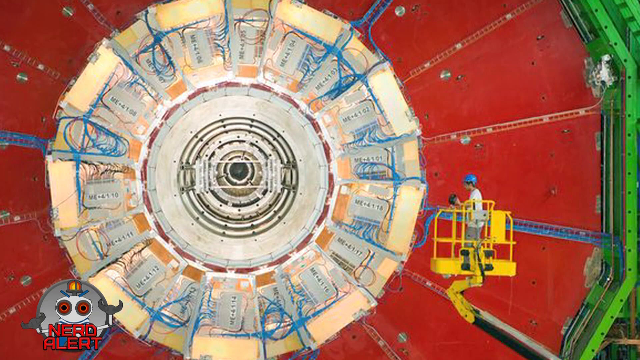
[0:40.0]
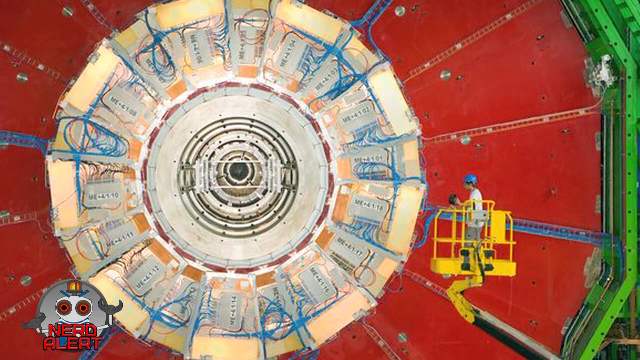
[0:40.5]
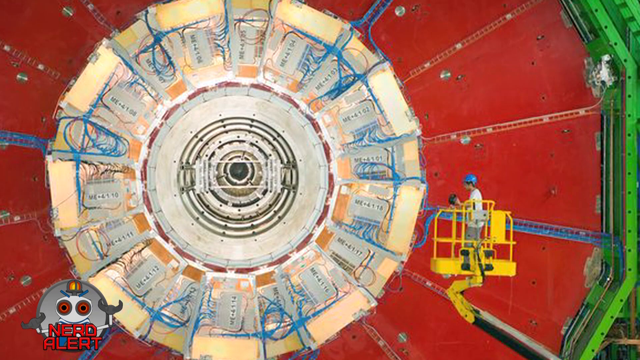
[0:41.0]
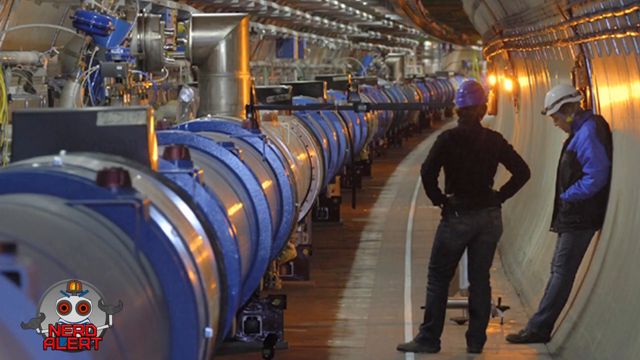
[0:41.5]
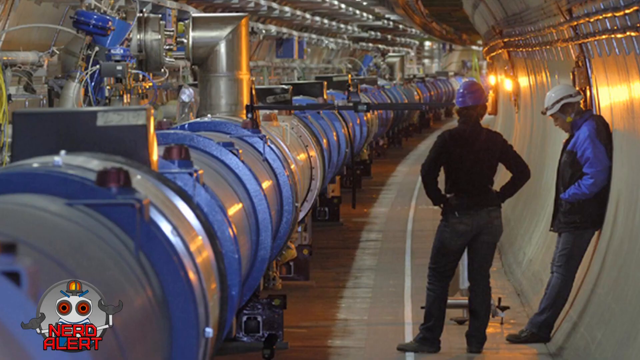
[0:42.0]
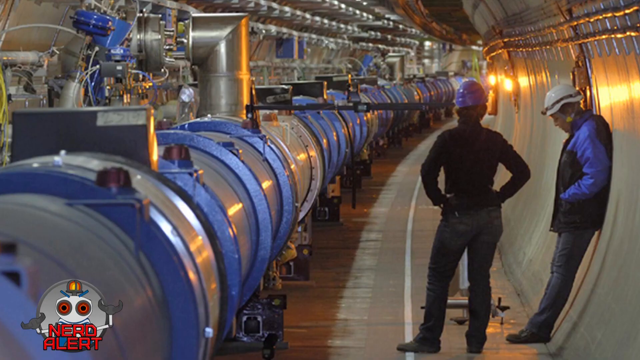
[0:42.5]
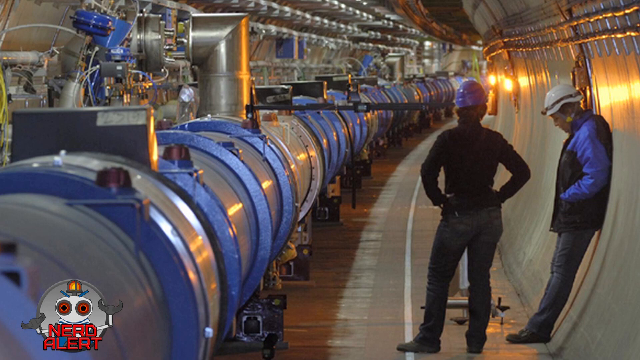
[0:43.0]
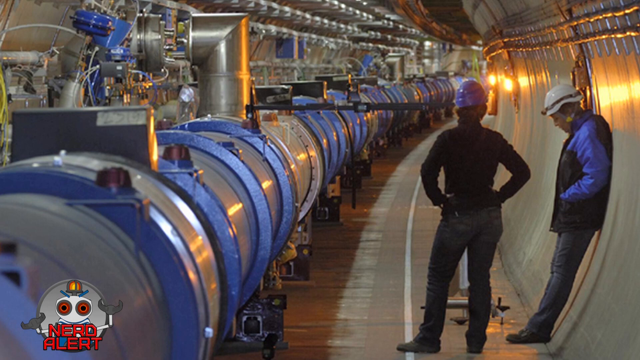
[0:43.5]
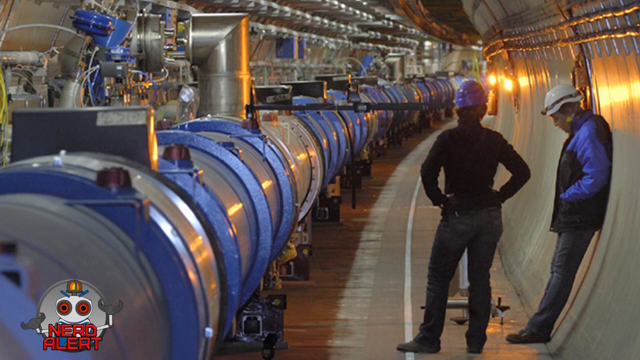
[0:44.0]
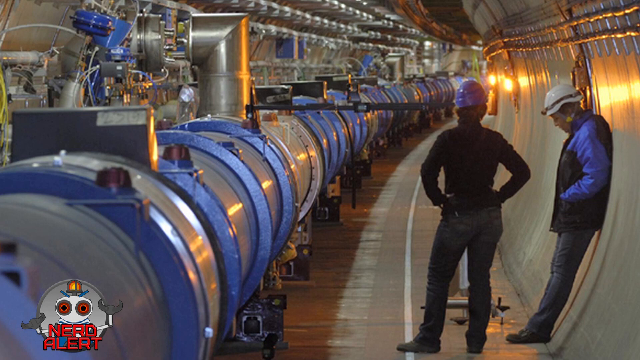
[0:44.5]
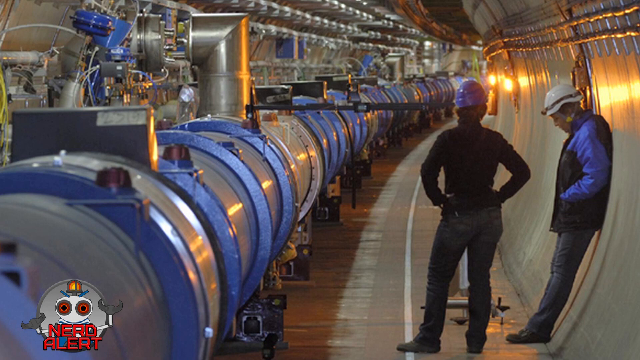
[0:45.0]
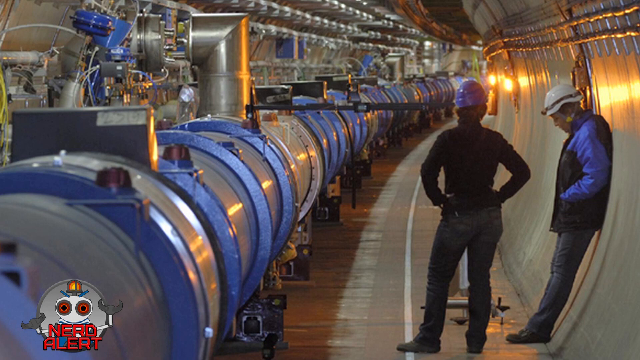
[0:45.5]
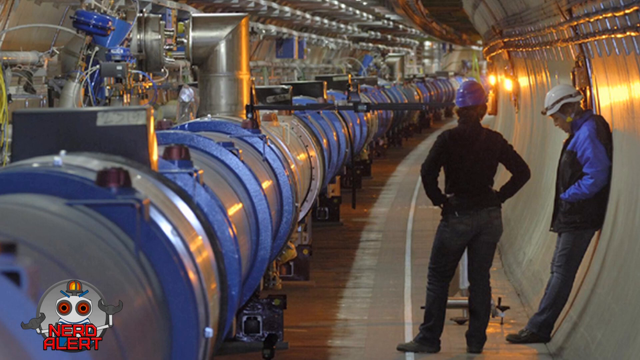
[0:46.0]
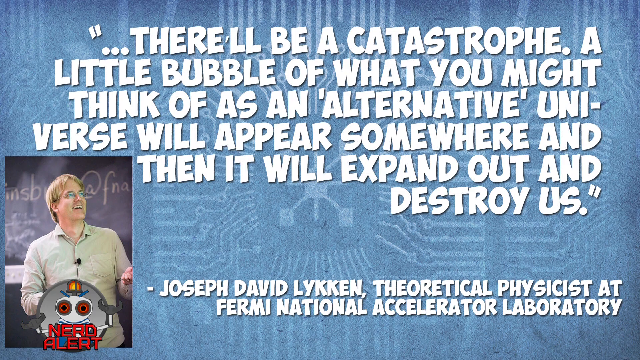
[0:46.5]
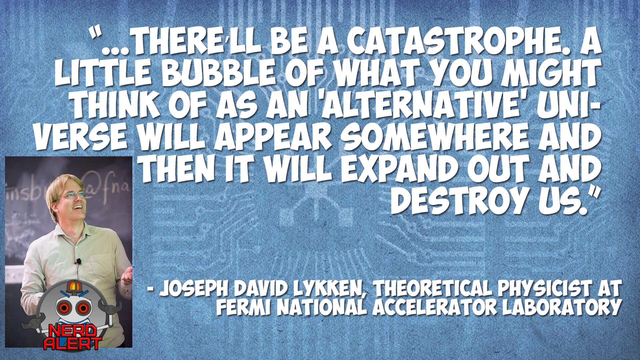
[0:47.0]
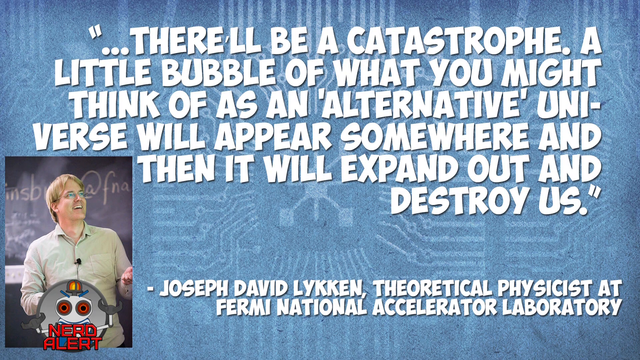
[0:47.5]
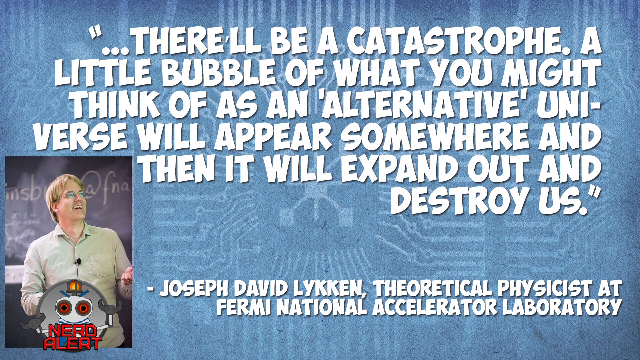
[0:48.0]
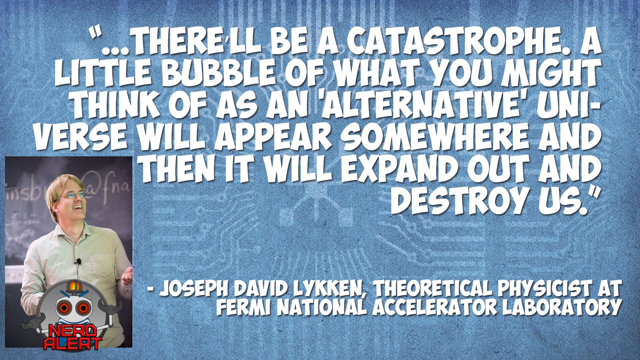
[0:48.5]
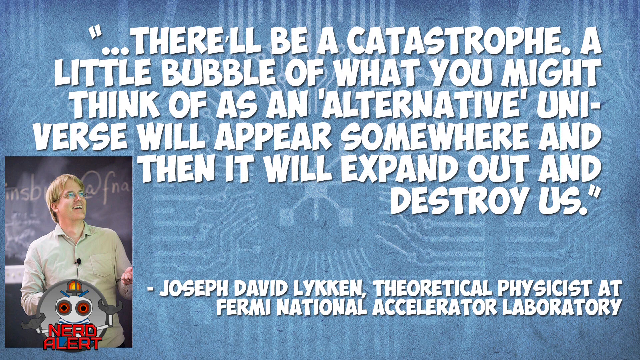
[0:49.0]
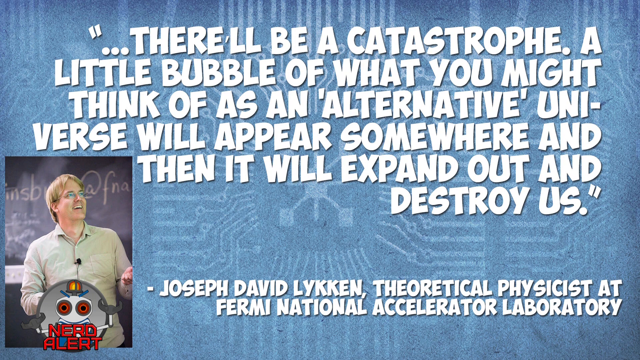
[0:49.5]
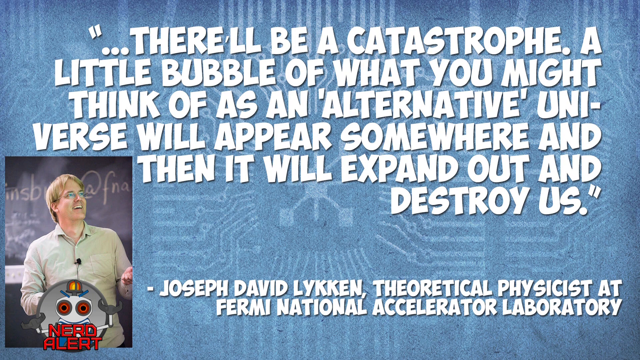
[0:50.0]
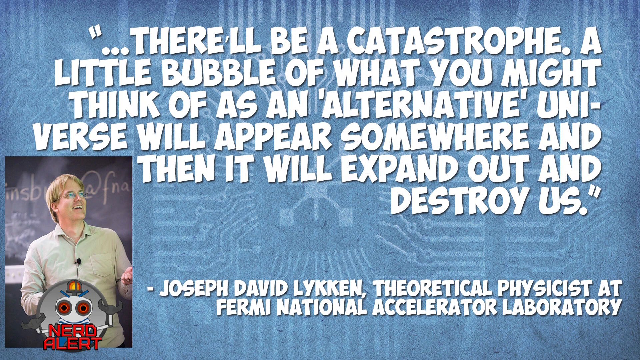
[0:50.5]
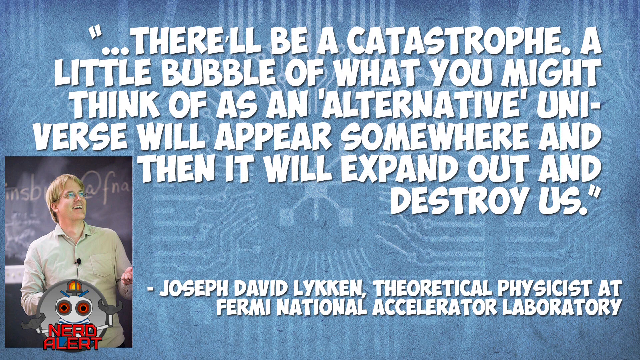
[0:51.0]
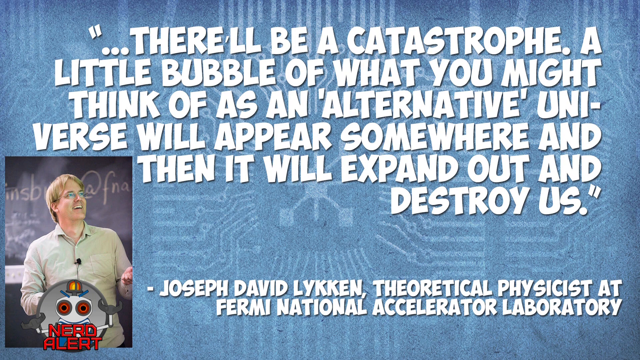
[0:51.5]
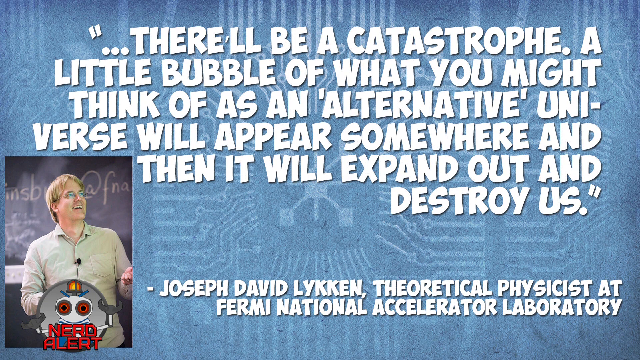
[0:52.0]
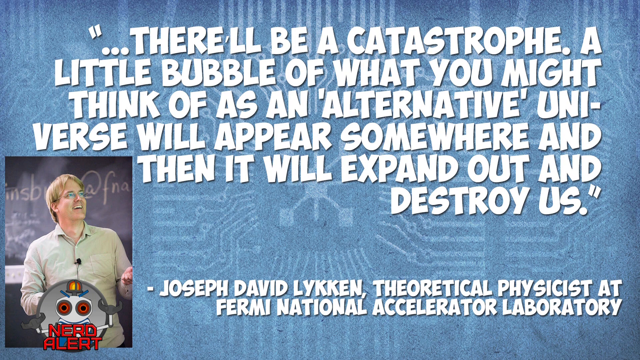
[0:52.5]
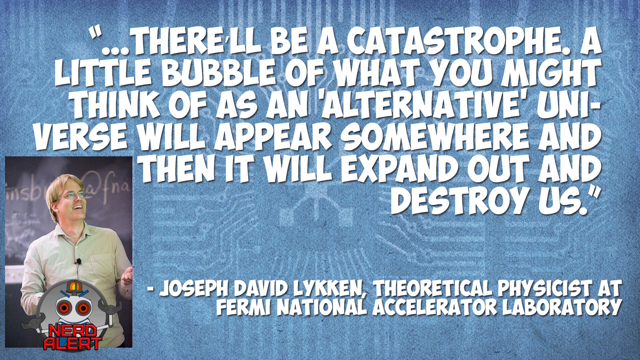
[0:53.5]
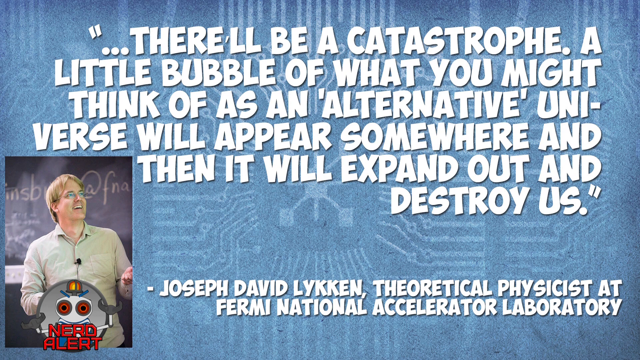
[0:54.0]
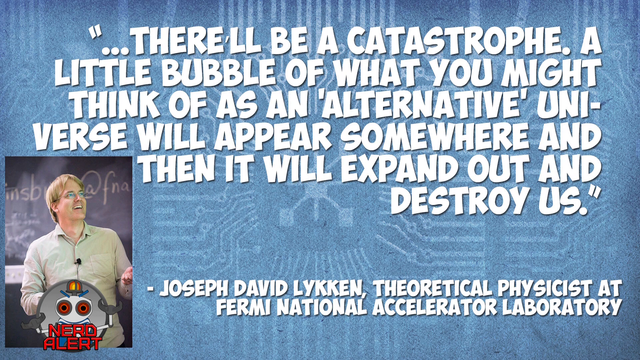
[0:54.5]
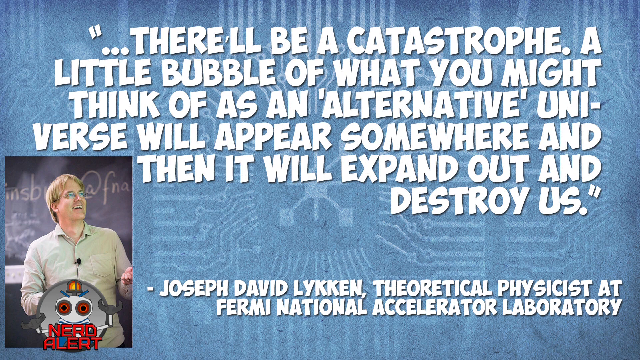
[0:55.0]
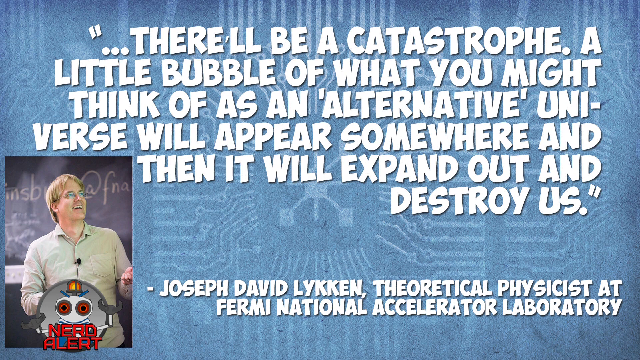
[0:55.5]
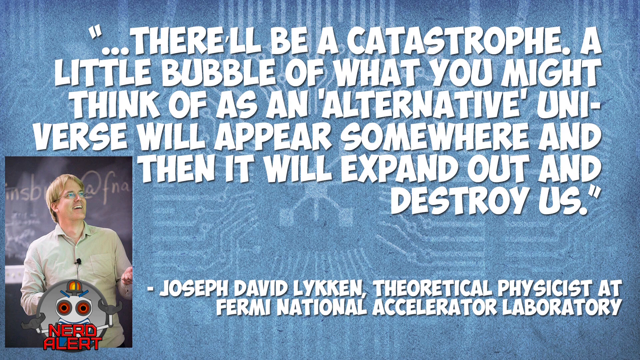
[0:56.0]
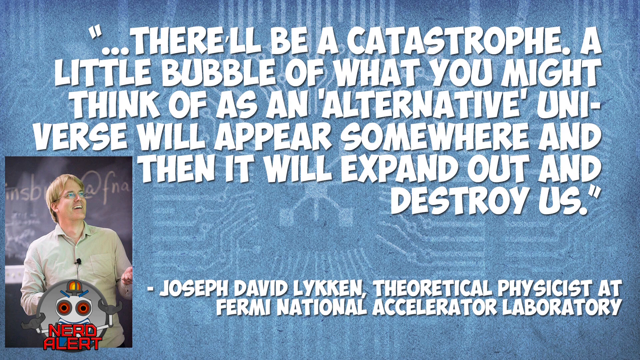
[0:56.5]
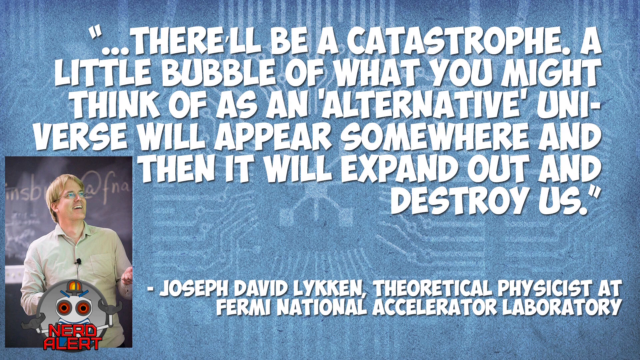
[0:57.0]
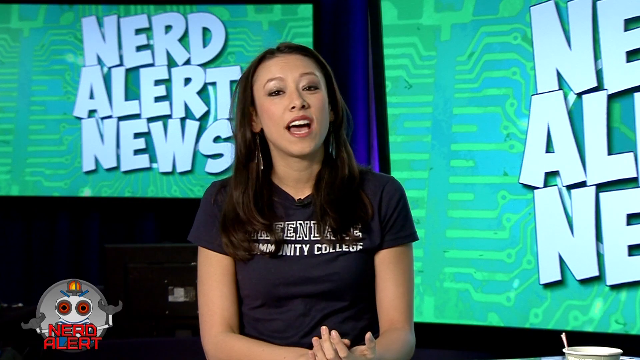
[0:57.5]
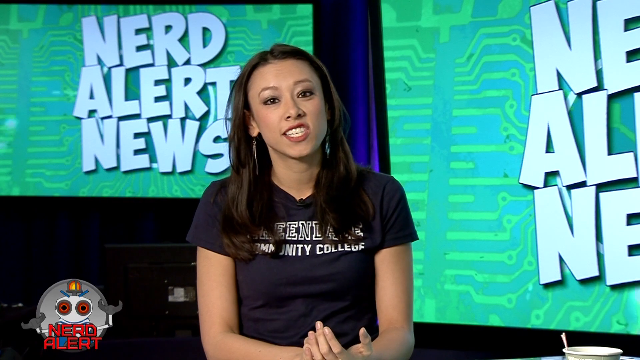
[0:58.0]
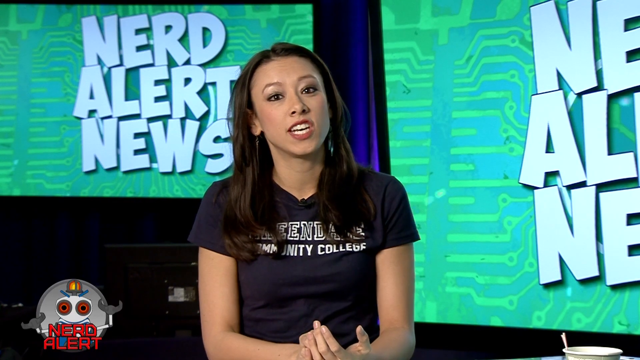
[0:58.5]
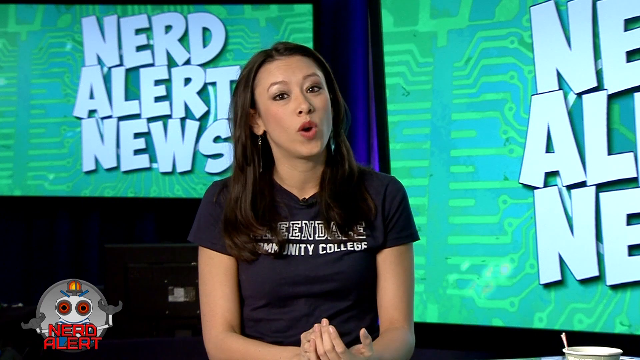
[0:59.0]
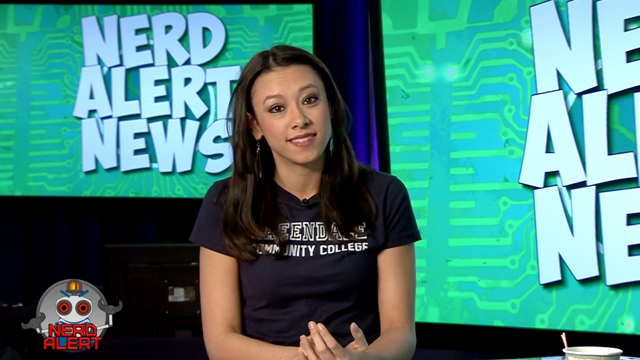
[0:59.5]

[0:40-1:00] Technicians and engineers are in a tunnel among industrial equipment. A statement attributed to David Lakin, theoretical physicist at Fermi National Accelerator Laboratory, appears: "there will be a catastrophe, a little bubble of what you might think of as an alternative universe will appear somewhere," which it says will then expand and destroy us.